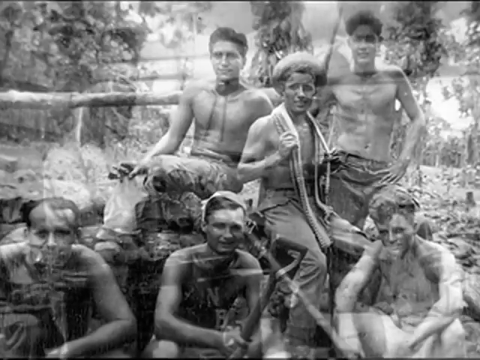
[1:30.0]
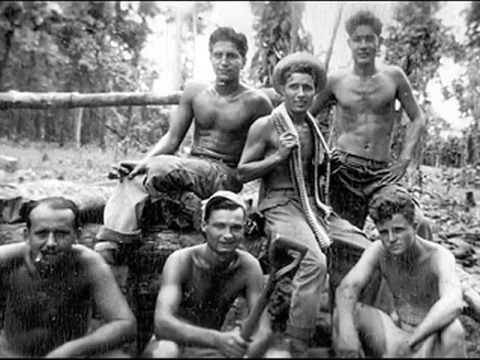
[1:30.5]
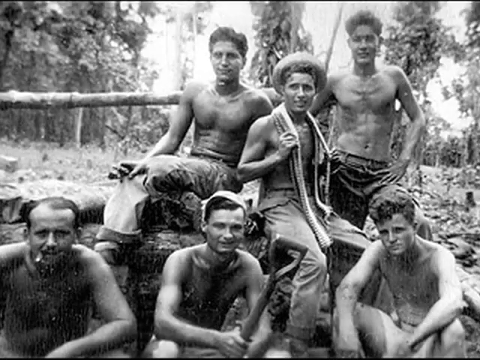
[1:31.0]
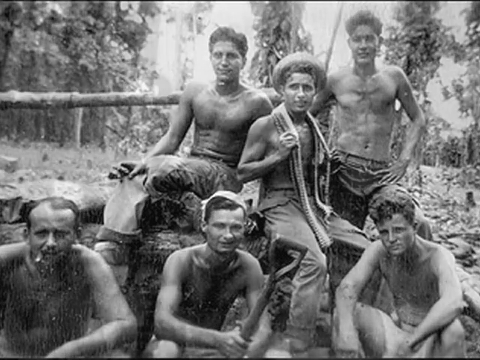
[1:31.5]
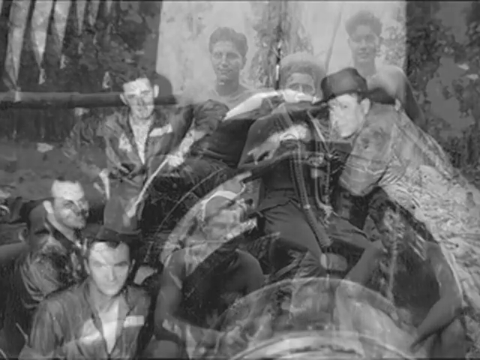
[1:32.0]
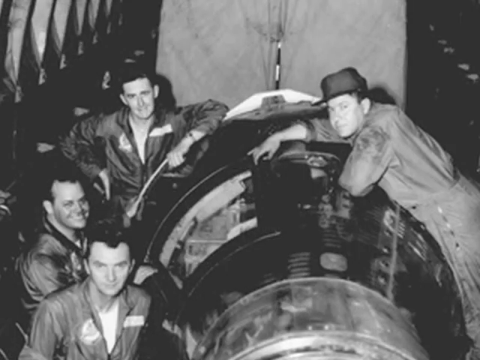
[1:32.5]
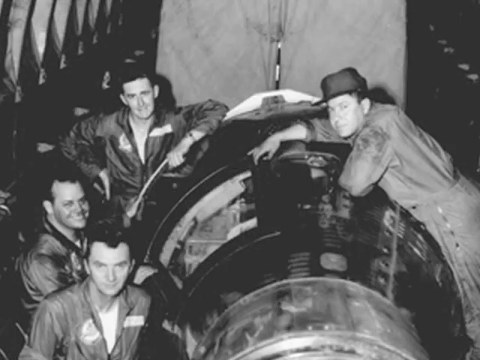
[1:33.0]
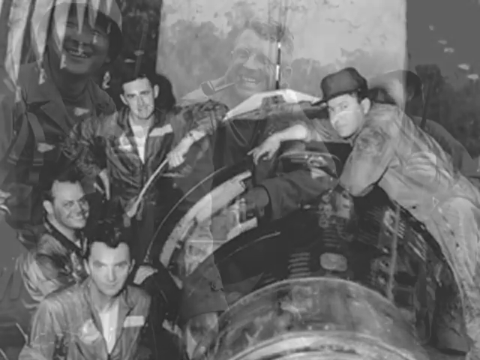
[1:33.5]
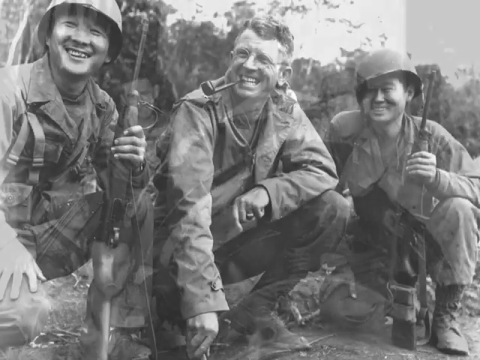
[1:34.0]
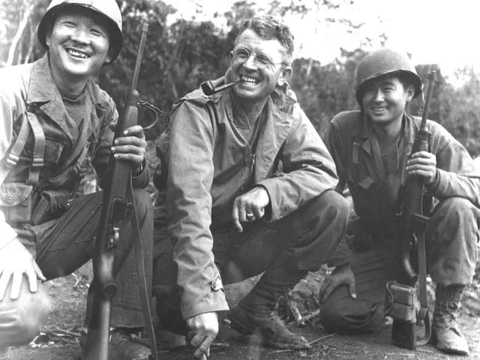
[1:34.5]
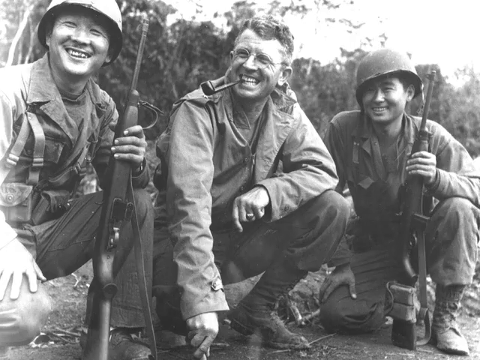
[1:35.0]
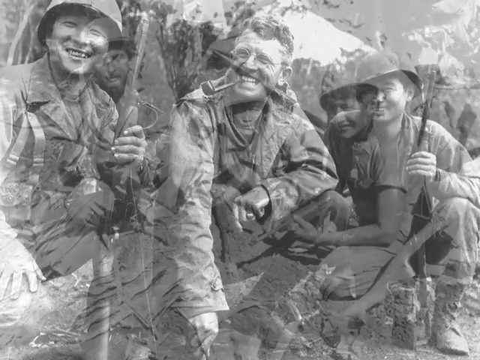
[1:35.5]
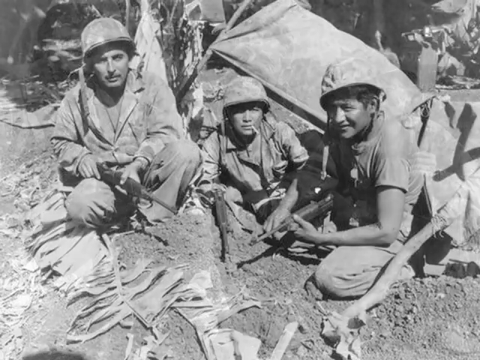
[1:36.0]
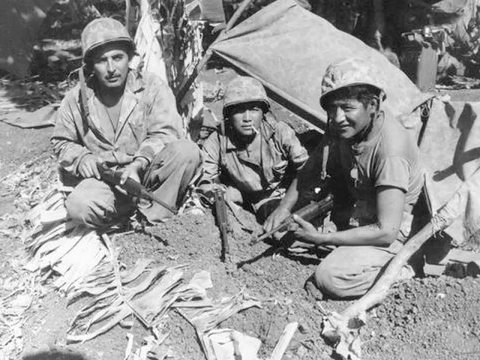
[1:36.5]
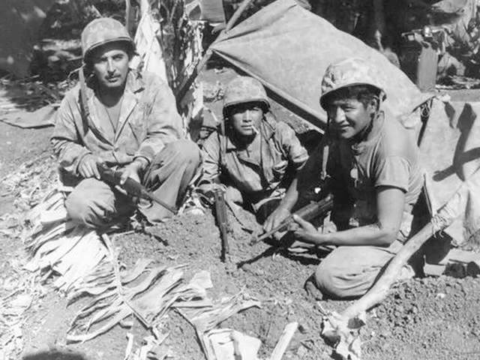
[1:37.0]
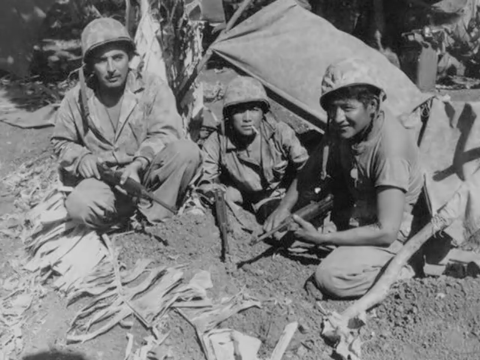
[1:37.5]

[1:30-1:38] A clear photo shows some people, apparently white, posing for a photo, seemingly by some trees. Someone appears to have a snake around the neck, though it may be something else, and they have no shirts on. Quick flash pictures of different white people follow. What looks like an airplane engine appears, and somebody is smoking a pipe. Two Asian people are seen, one on the right, and a man with a pipe is on the left, smiling for a picture. Finally there is a picture of some soldiers in military uniform by what could be a tent; one may have a cigarette in his mouth.